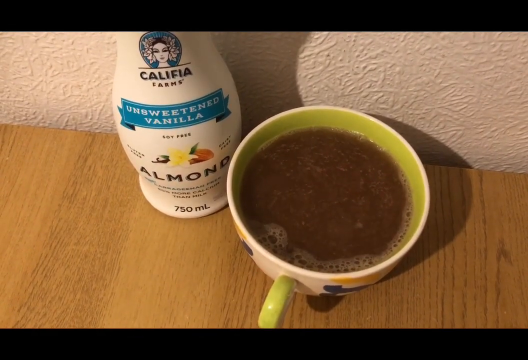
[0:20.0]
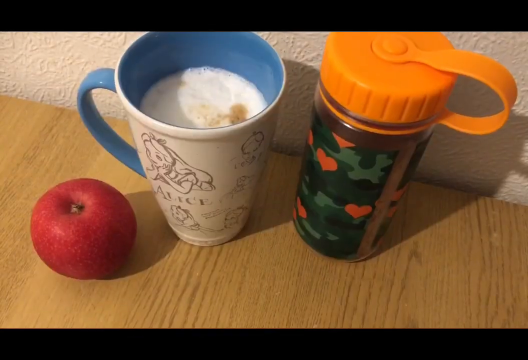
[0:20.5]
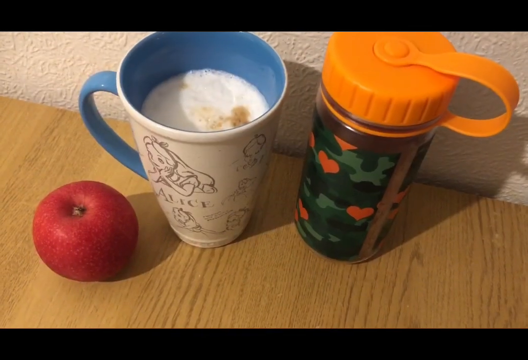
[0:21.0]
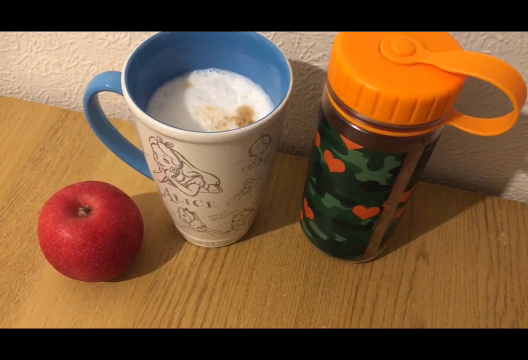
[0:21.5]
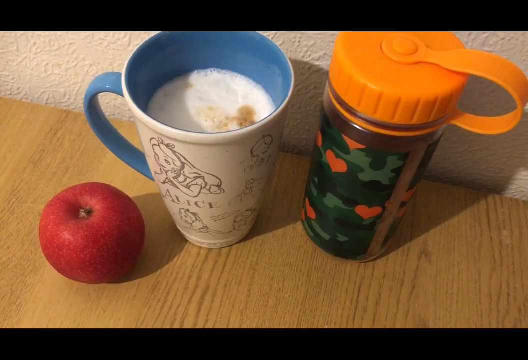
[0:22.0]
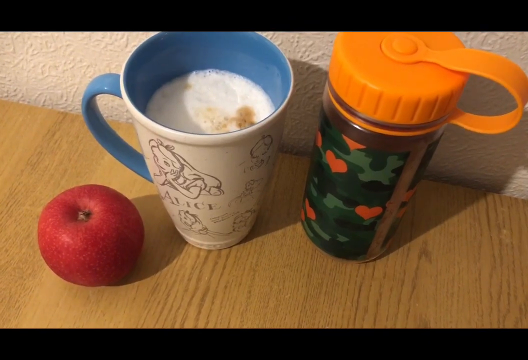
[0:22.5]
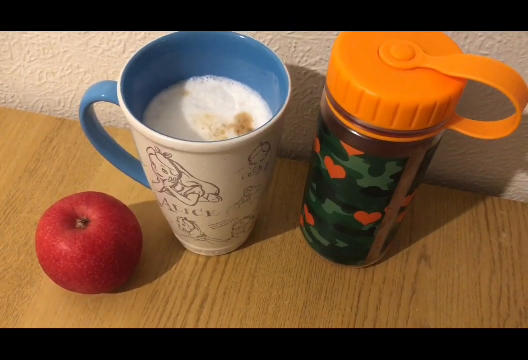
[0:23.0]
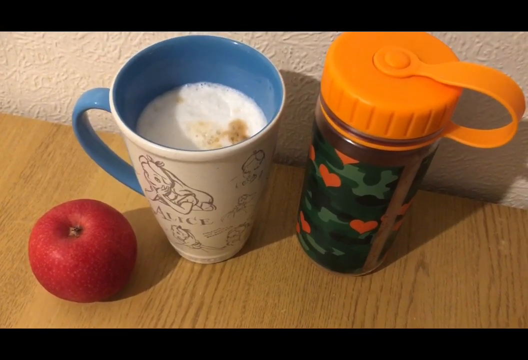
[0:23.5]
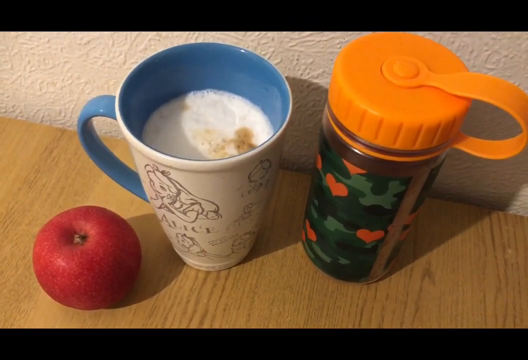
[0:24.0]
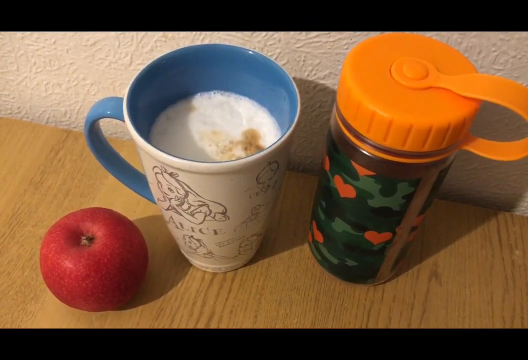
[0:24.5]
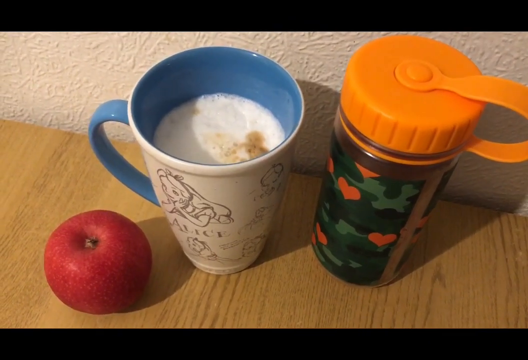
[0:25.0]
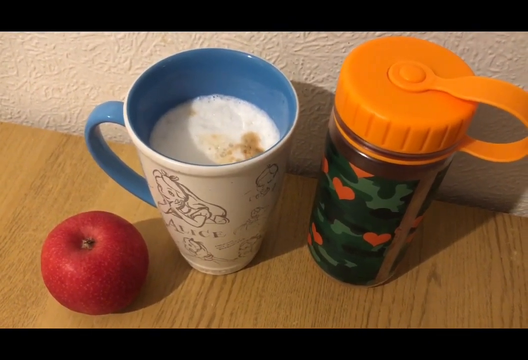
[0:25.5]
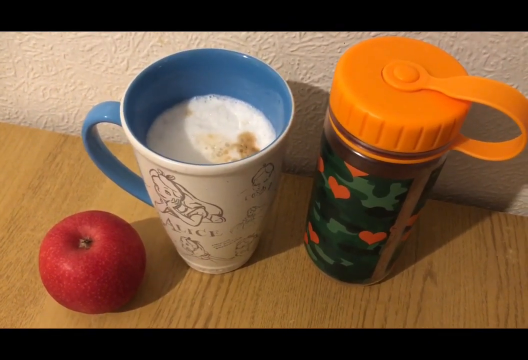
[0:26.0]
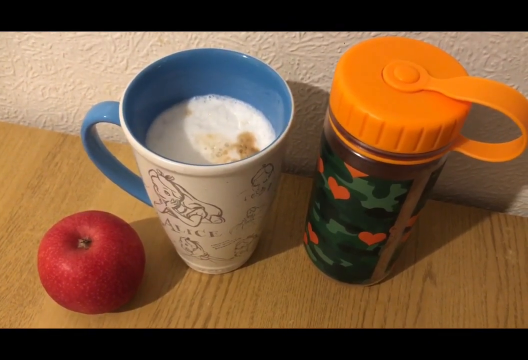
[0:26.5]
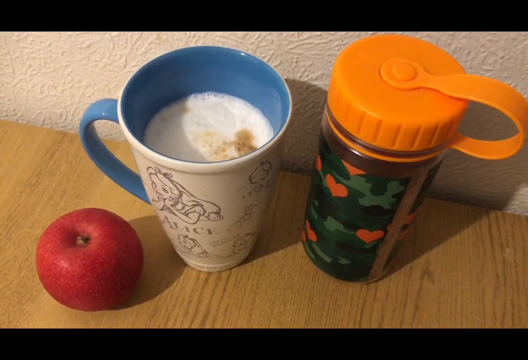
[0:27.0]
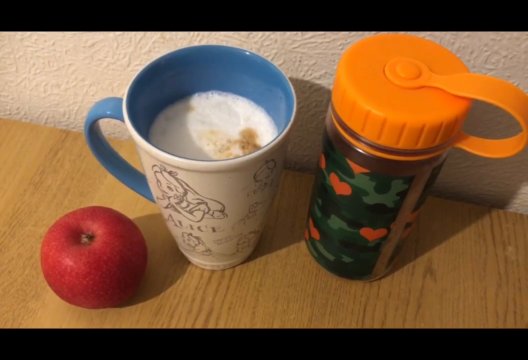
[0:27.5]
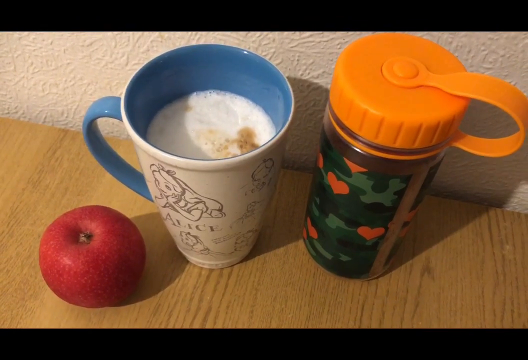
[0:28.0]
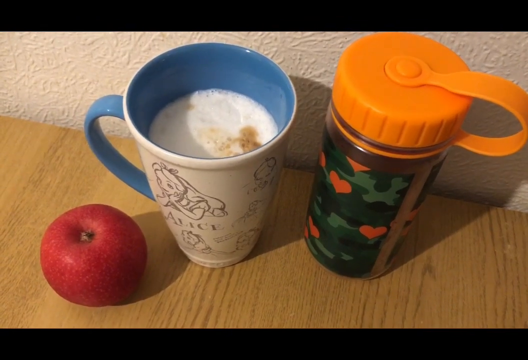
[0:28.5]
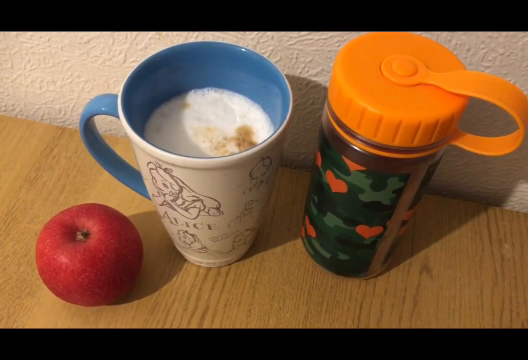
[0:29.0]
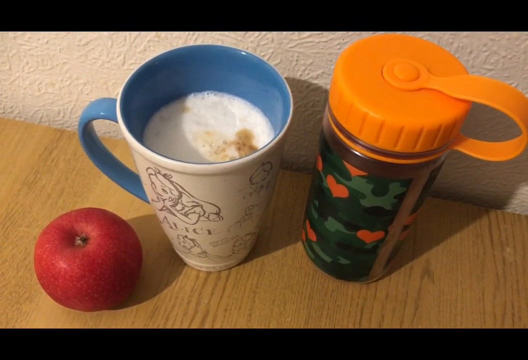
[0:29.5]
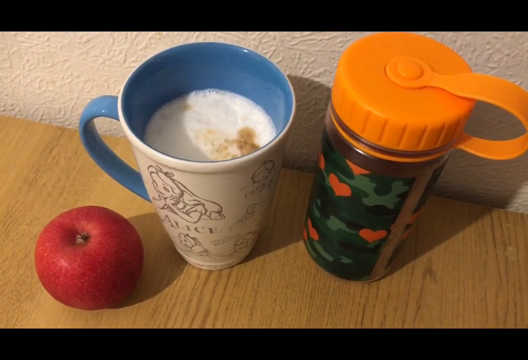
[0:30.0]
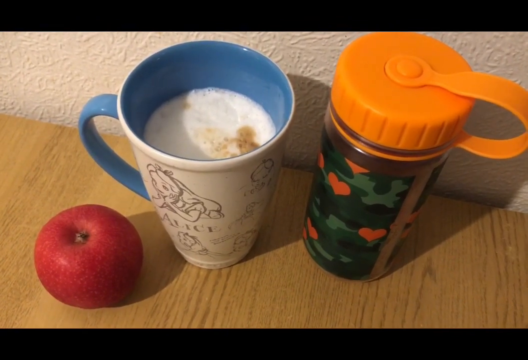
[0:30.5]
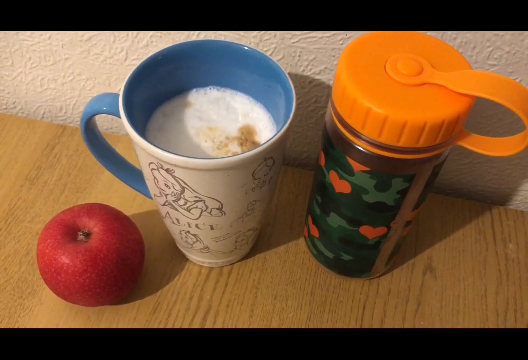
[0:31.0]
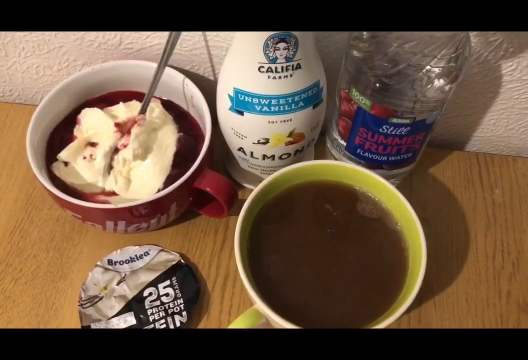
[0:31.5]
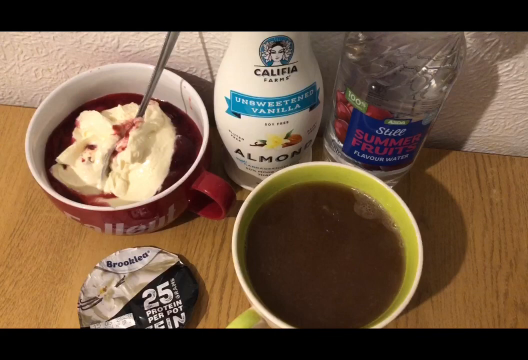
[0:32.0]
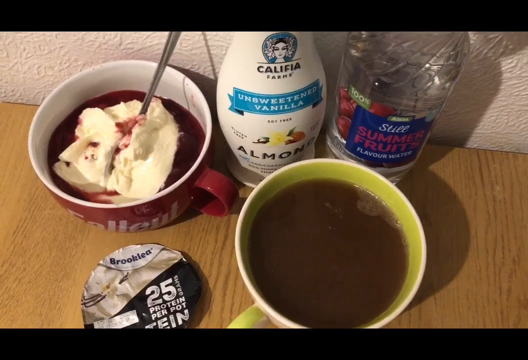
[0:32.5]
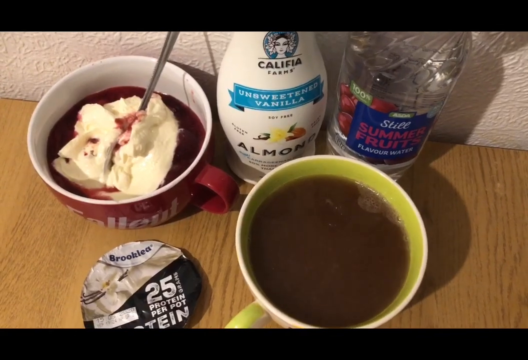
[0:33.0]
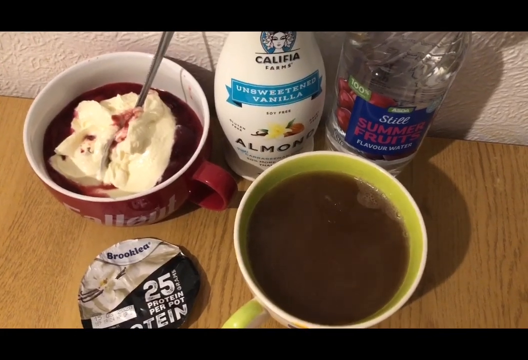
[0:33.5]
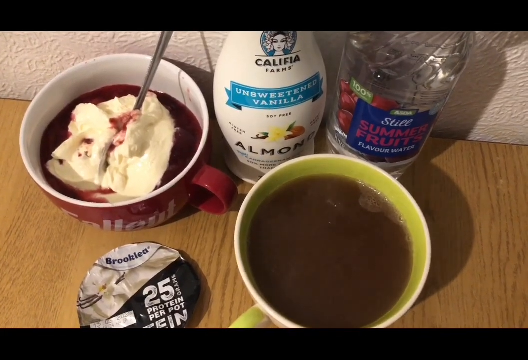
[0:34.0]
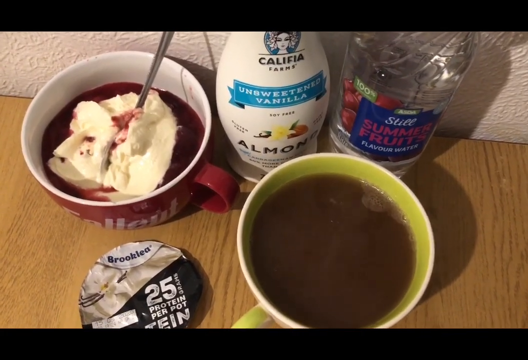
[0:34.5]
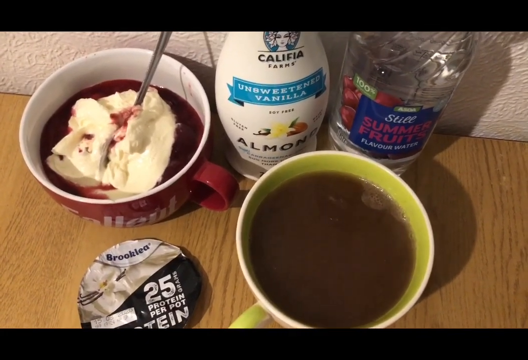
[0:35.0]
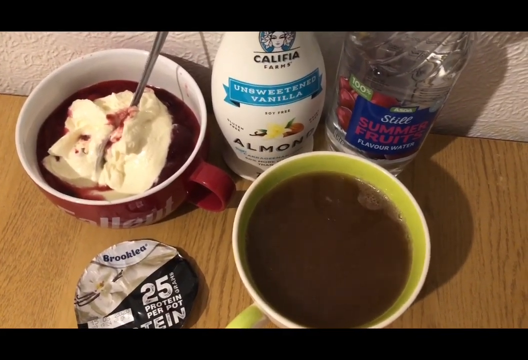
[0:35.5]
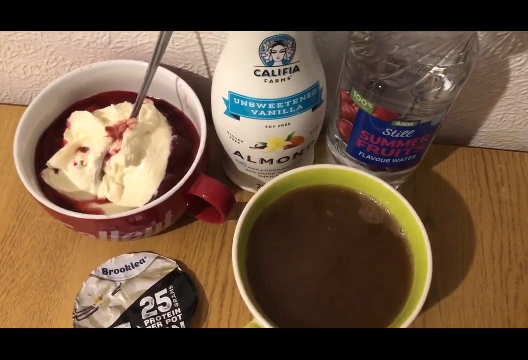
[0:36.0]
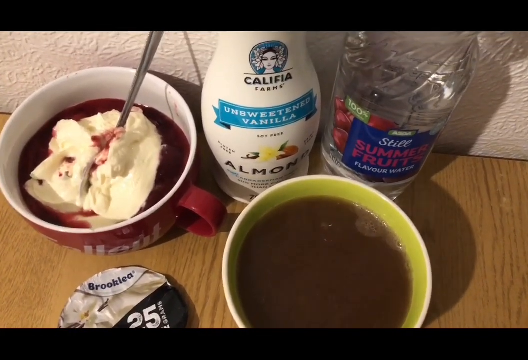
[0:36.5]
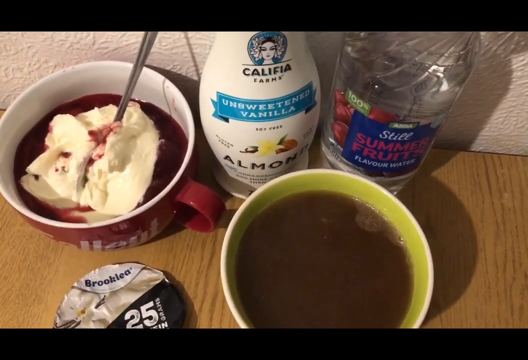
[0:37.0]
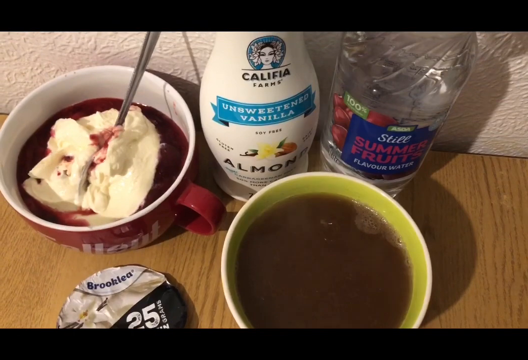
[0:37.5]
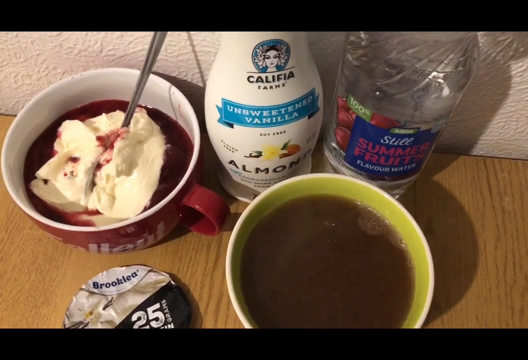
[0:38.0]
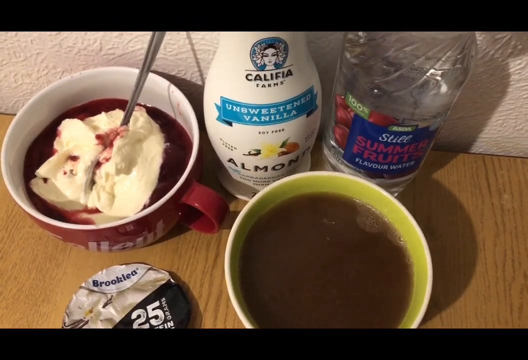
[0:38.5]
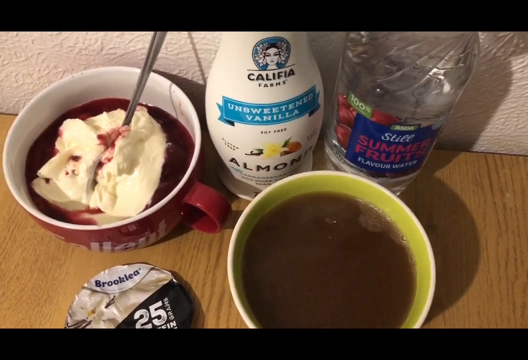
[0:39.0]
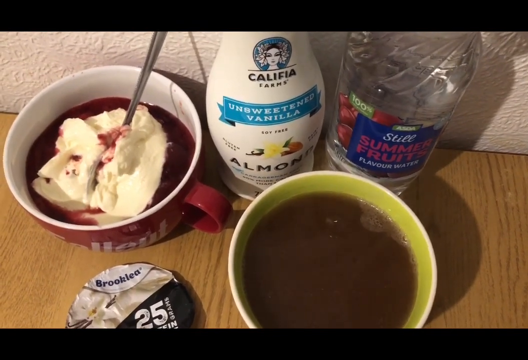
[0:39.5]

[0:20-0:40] A light brown wooden tabletop is in front of a white textured wall. On the table is a white cup with a light green handle and light green inside, filled almost to the top with dark brown coffee, with little bubbles around the edges. To its left is a tall white container of Califia Farms unsweetened vanilla almond milk. The screen changes to the same brown tabletop, now with a small red apple on the left. To the right of it is a tall mug with a brown outline Alice in Wonderland decoration, a blue handle and blue inside, filled about three quarters of the way with a white liquid that looks like milk, with some kind of brown powder sprinkled on top. To the right of that is a clear cylinder water bottle with a sort of camo-style label design with orange hearts on it and an orange circular lid with a little handle on the right side. It looks like someone is standing in front of the table, filming down. The screen changes again to the same table: on the left is a large red cup with a white interior and some red text on the outside, filled with what looks like white ice cream or yogurt with some kind of red berry-like sauce around the outside and a spoon stuck in the middle. To its right is the white container of Califia Farms unsweetened vanilla almond milk, and to the right of that a white or clear bottle that looks like it may be some flavored water, with a label that says "still summer fruit flavored water" and pictures of red berries. In front of that is a large light green cup of dark brown coffee, and to its left is what looks like a foil circular yogurt top that says "Brooklea, 25 protein per pot" and is about half silver and half blue.